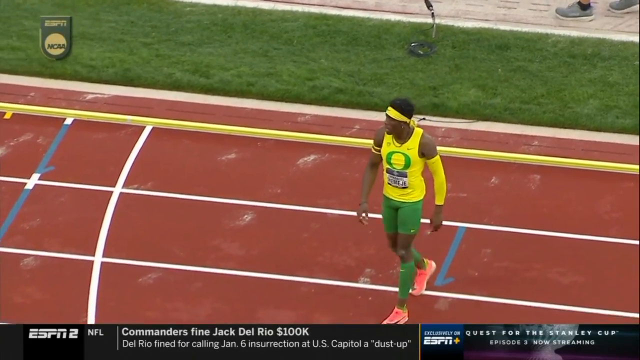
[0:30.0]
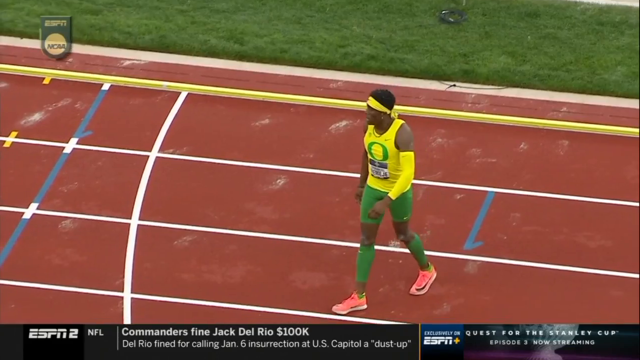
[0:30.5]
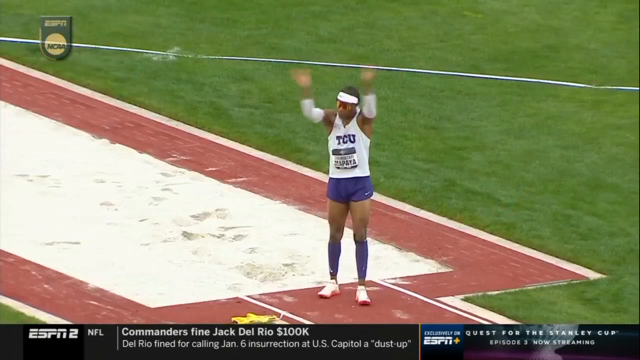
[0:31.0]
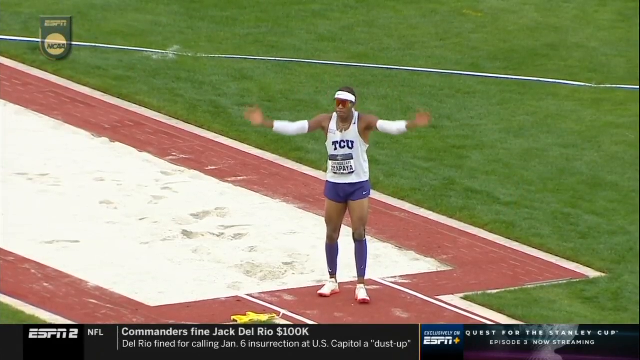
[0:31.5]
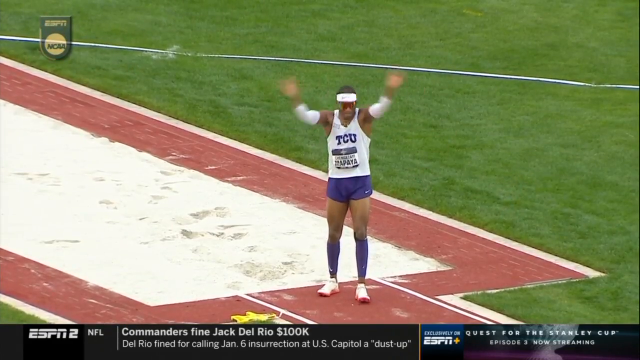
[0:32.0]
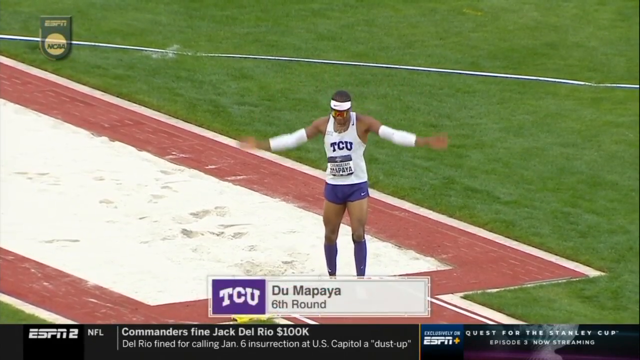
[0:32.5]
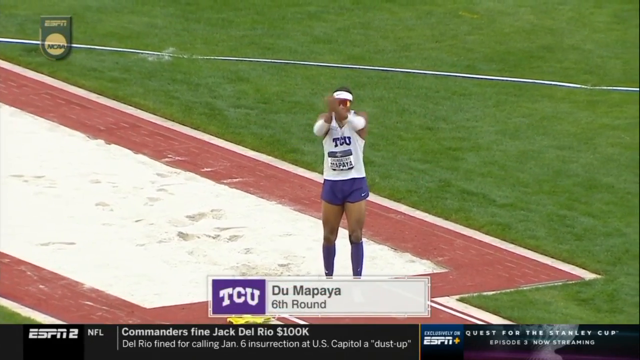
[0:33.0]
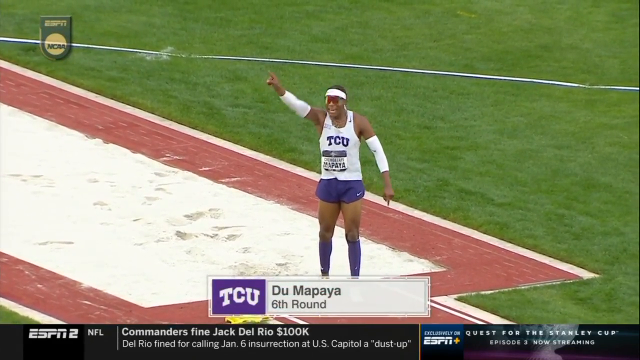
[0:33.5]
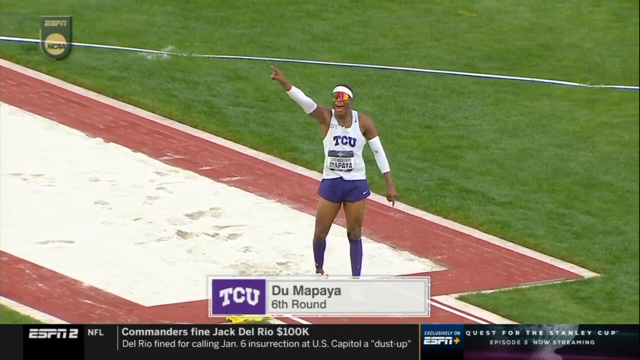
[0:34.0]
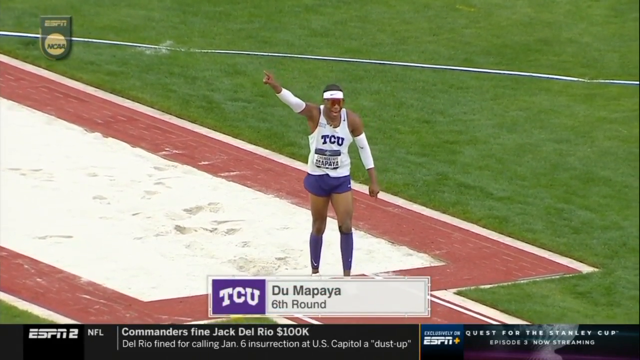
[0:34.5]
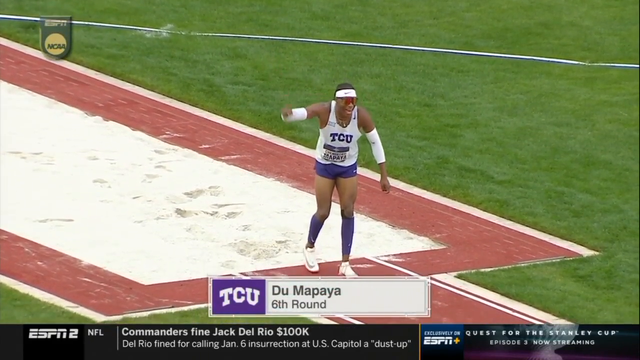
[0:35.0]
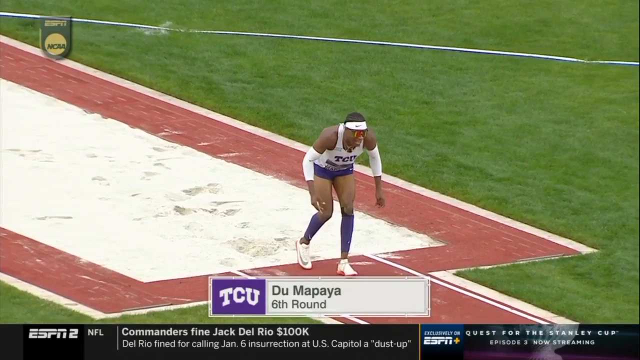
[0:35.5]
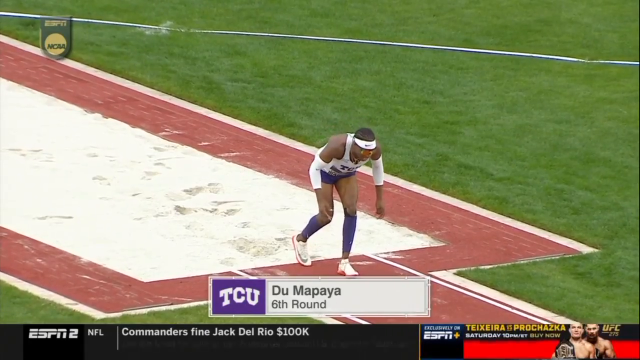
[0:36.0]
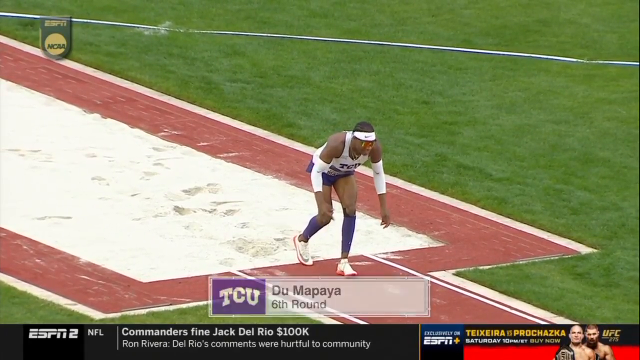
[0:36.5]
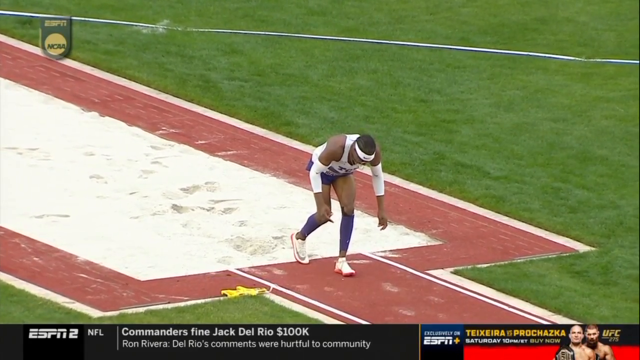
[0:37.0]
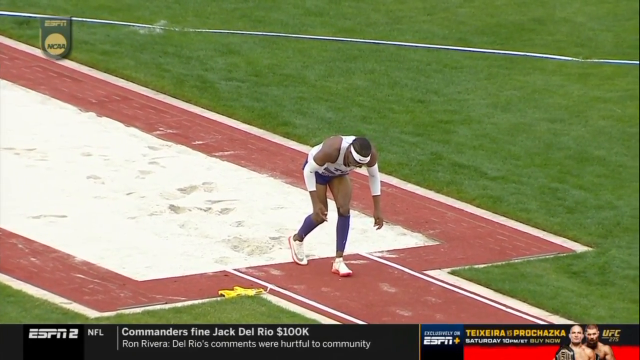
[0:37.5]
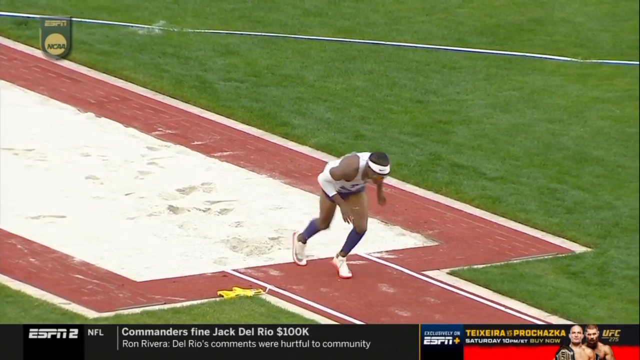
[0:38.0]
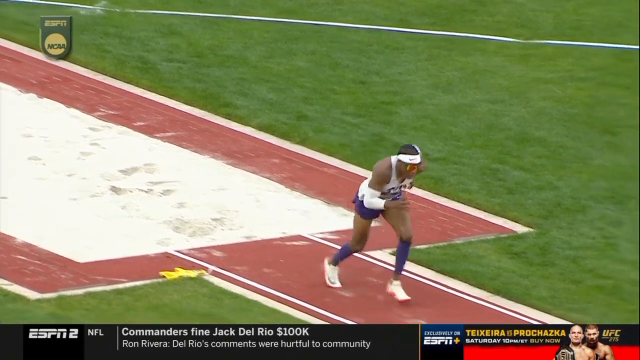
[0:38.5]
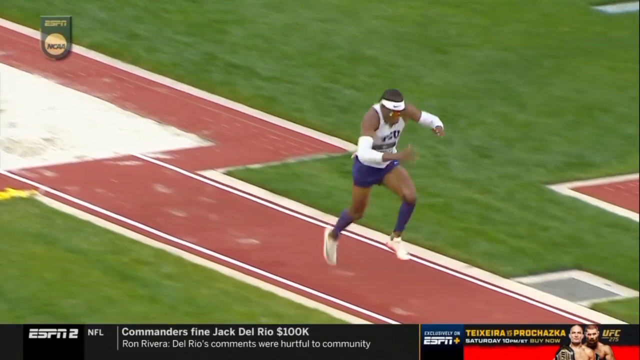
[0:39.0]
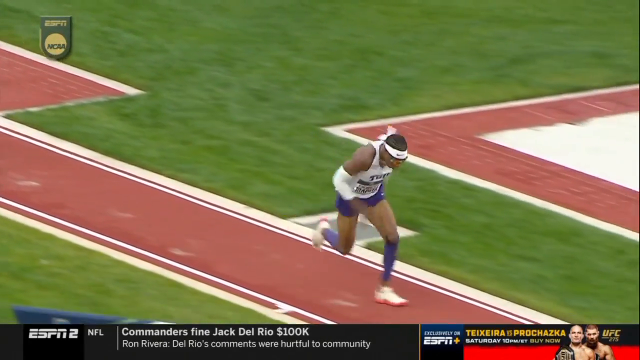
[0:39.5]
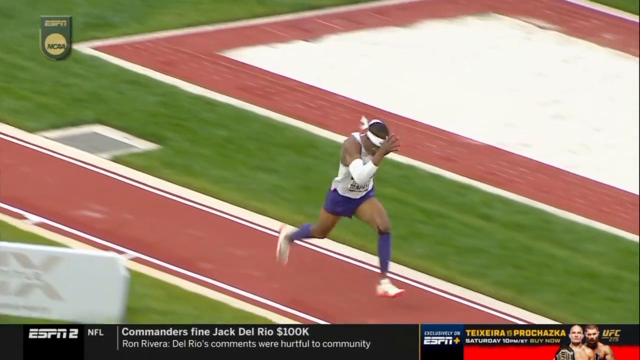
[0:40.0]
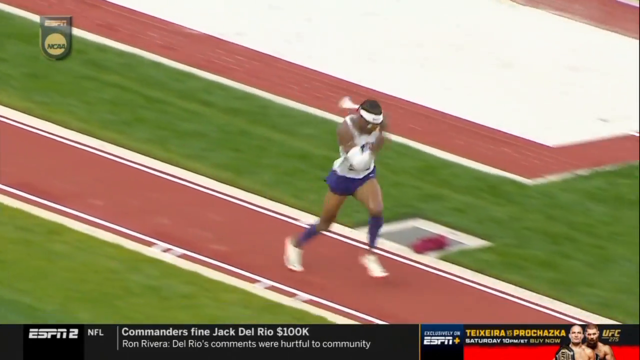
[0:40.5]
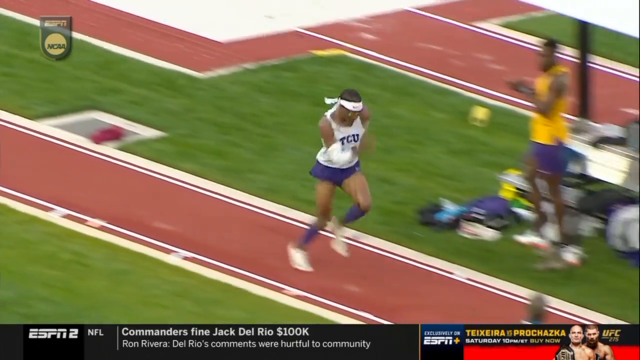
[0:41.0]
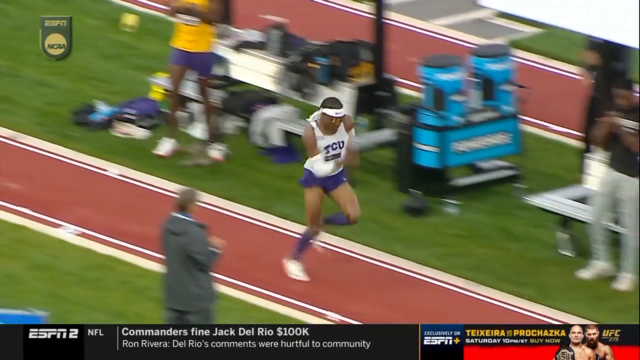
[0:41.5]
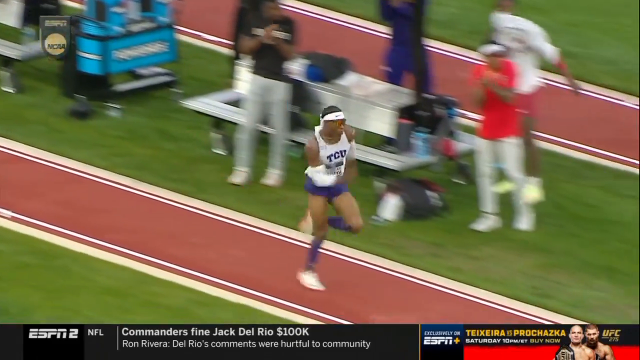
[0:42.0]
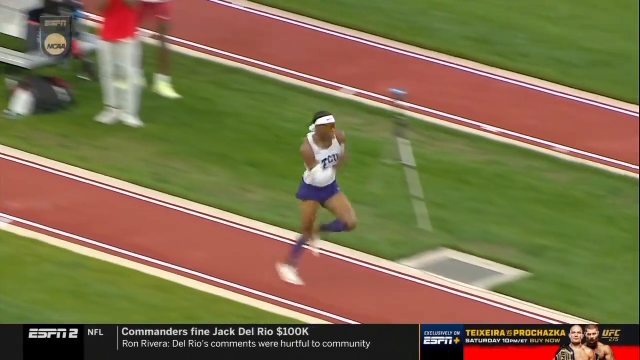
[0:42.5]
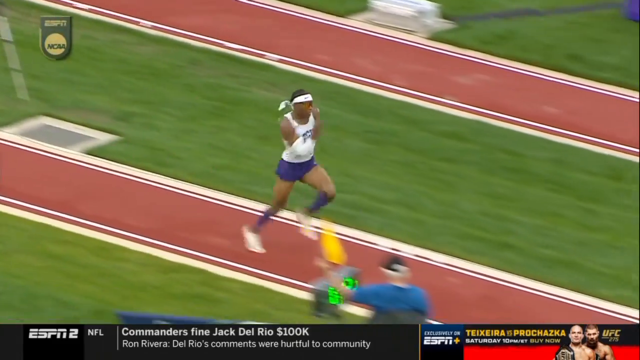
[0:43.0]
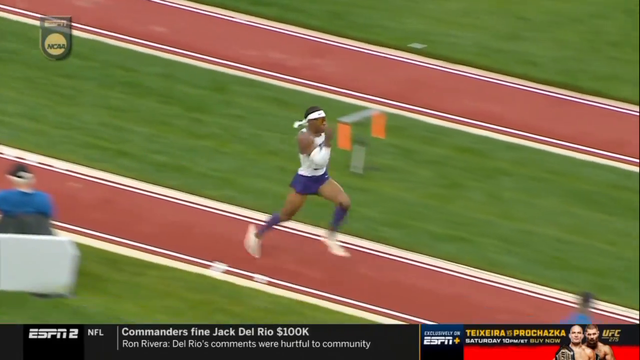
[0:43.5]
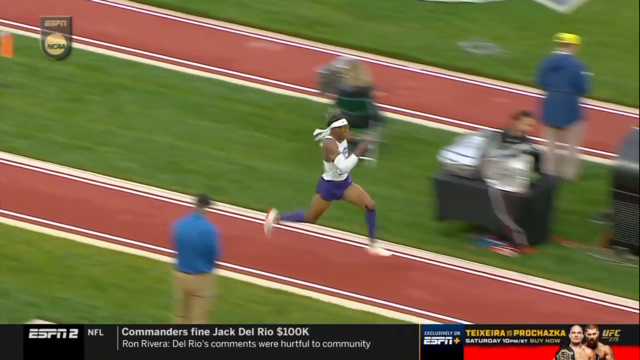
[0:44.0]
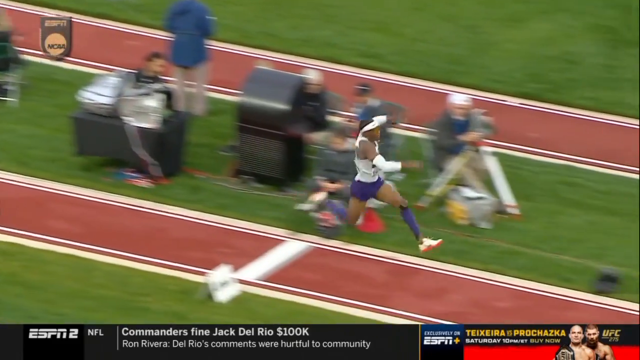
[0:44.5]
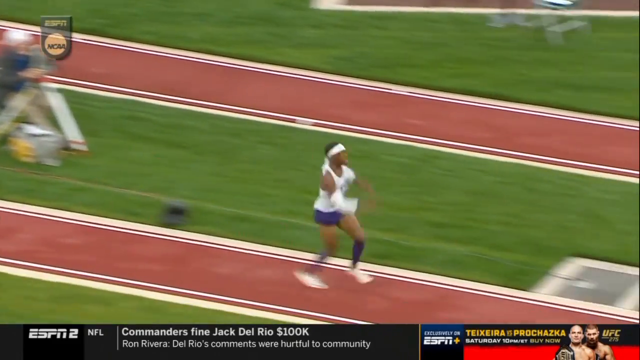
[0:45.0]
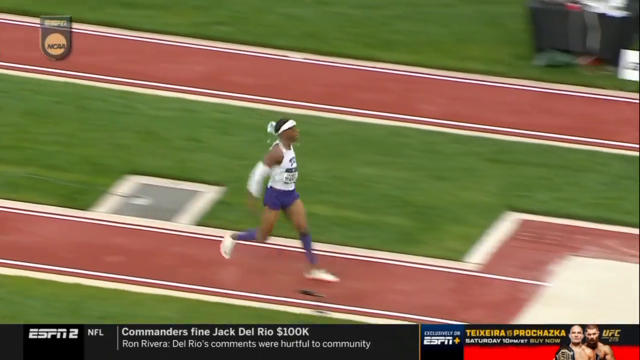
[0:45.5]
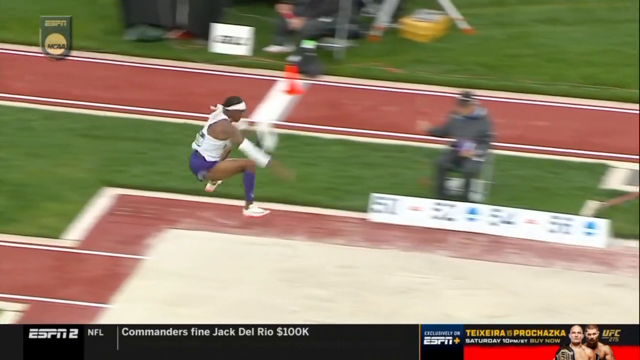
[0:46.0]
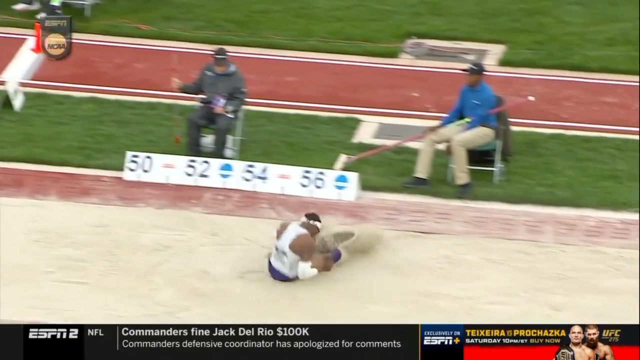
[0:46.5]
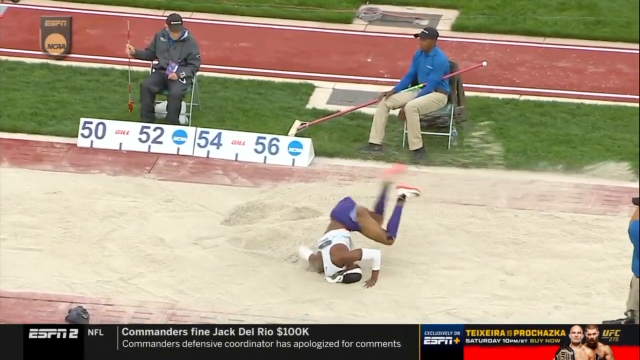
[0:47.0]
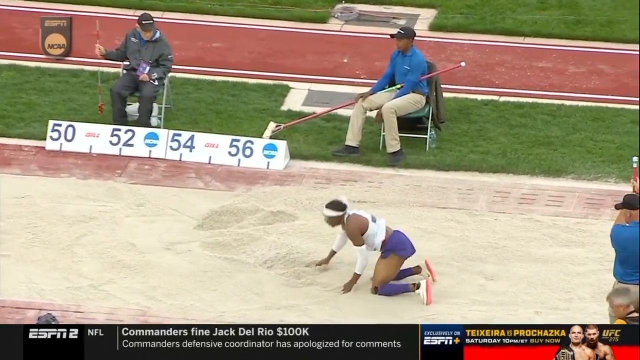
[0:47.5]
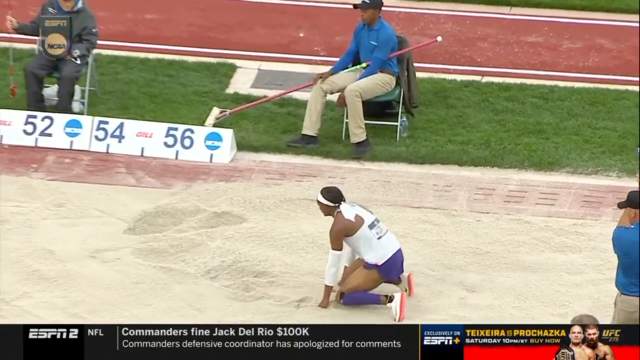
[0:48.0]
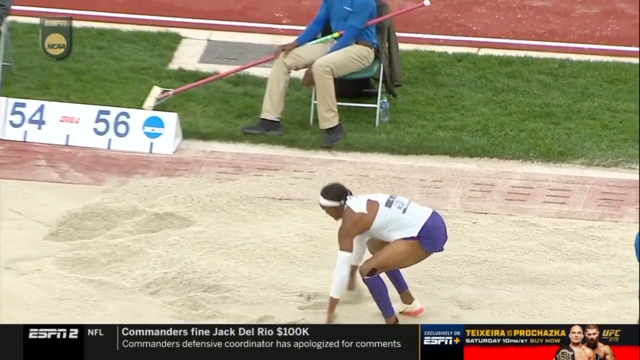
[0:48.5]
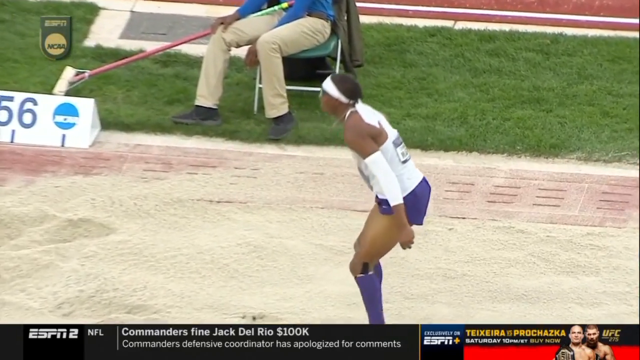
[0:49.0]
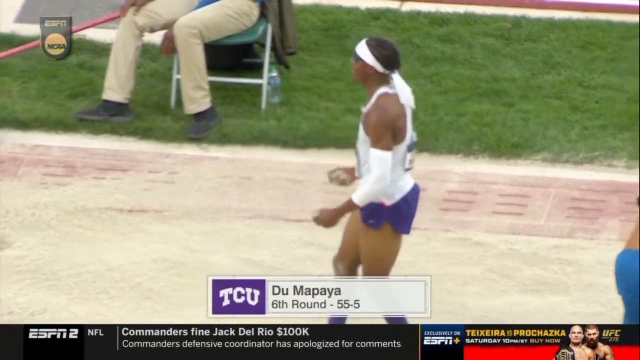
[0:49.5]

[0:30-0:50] The focus shifts to a different jumper in a white tank with purple "TCU" letters on his chest. He wears short purple shorts, purple calf sleeves, white shoes, white elbow sleeves, a headband with a small trail of material at the back where it is tied, and somewhat multicolored sunglasses. A text box beneath him identifies him as "TCU" and his name, "Dumapaya", with a small purple TCU logo to the left of the name. Before starting, he turns to the crowd and claps above his head. He then runs down the track, takes some broader jumps, and makes a final longer jump into the sand pit. ESPN markings run along the bottom of the screen, along with news and upcoming programming advertisements.